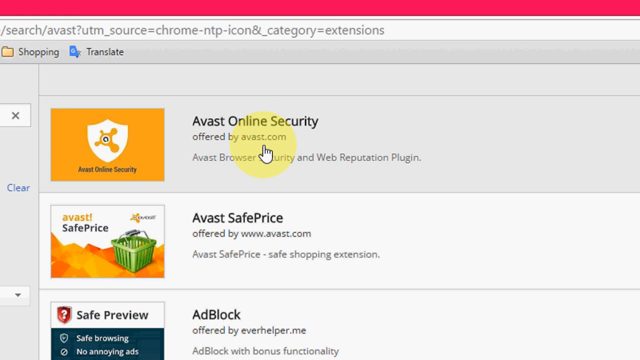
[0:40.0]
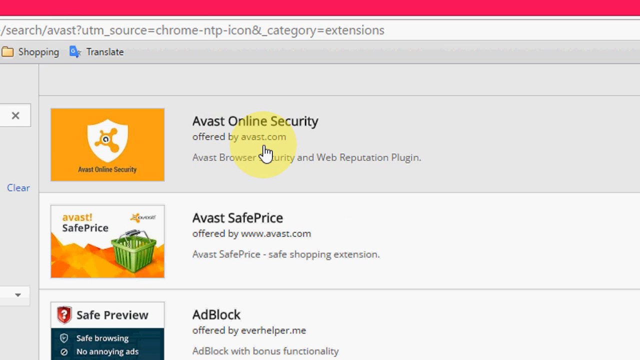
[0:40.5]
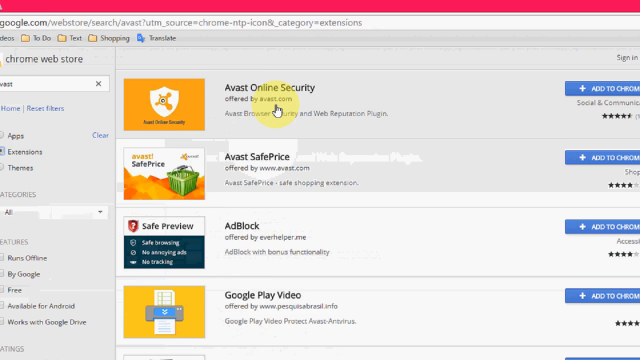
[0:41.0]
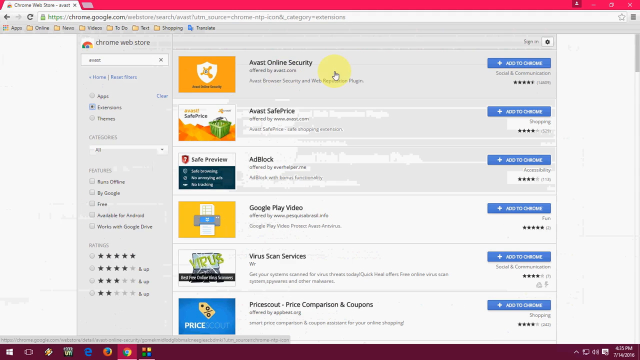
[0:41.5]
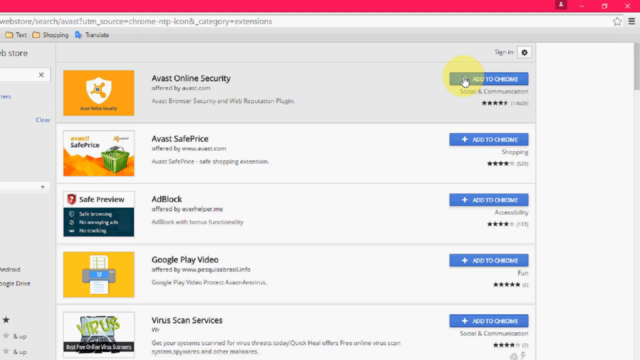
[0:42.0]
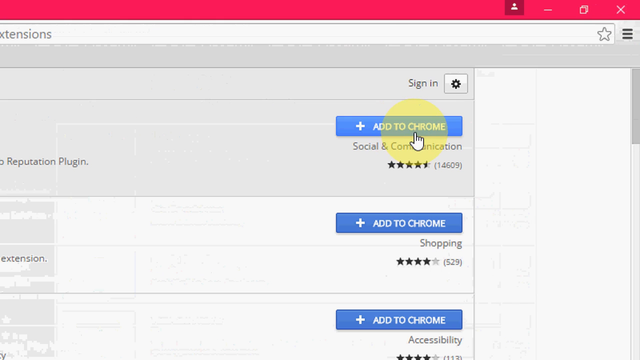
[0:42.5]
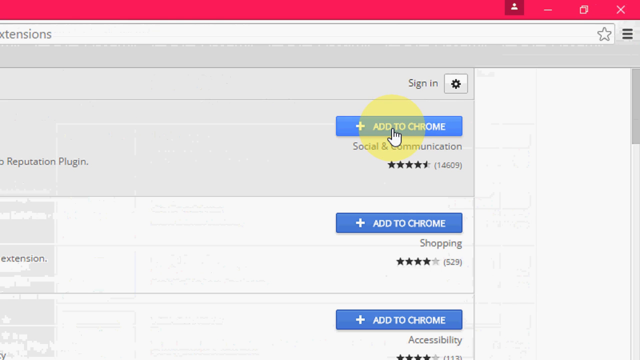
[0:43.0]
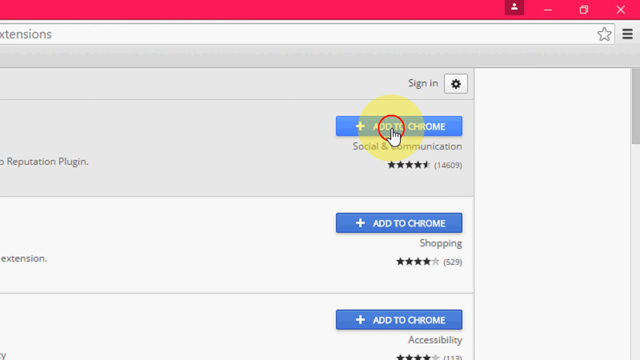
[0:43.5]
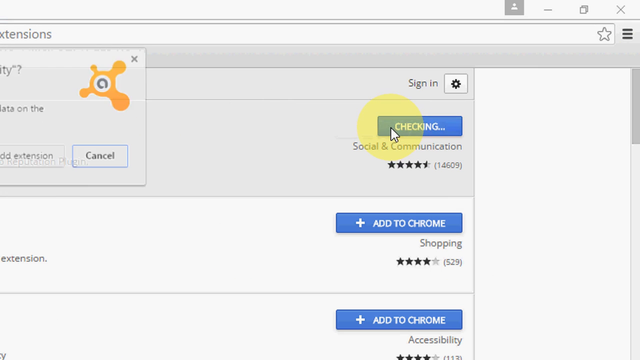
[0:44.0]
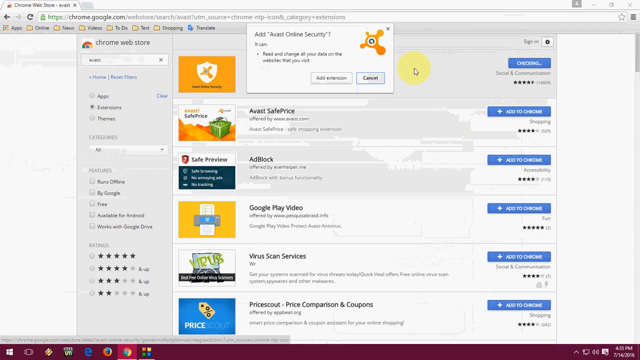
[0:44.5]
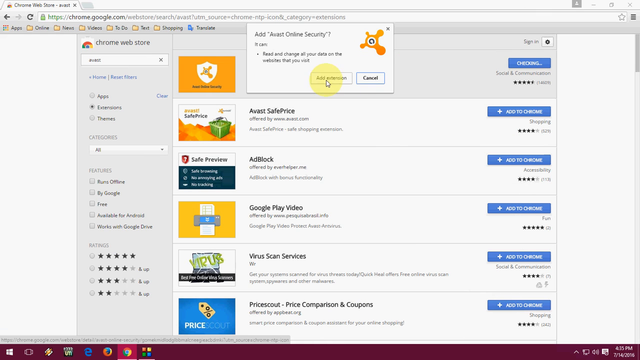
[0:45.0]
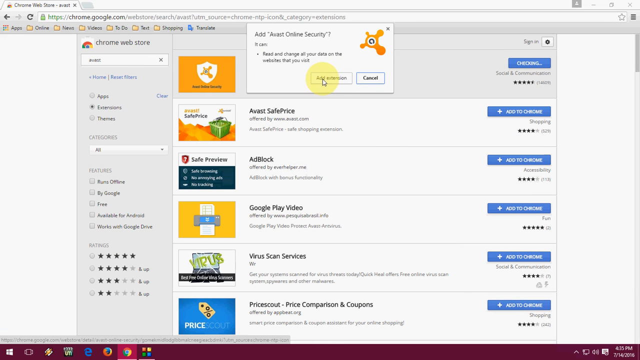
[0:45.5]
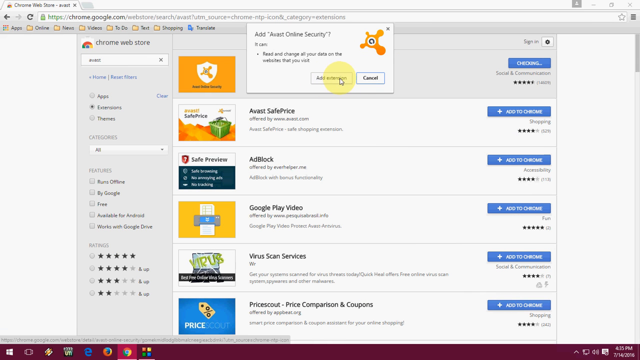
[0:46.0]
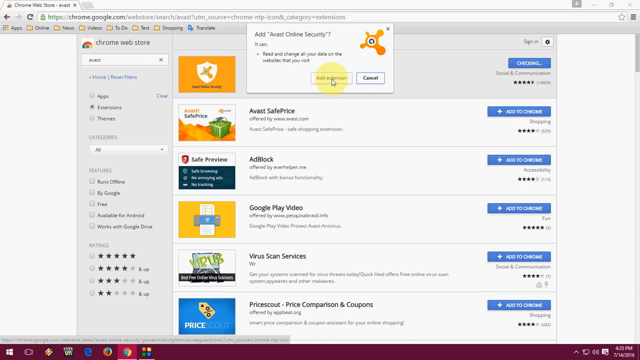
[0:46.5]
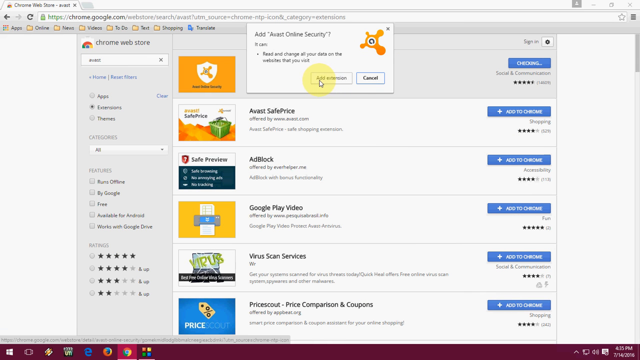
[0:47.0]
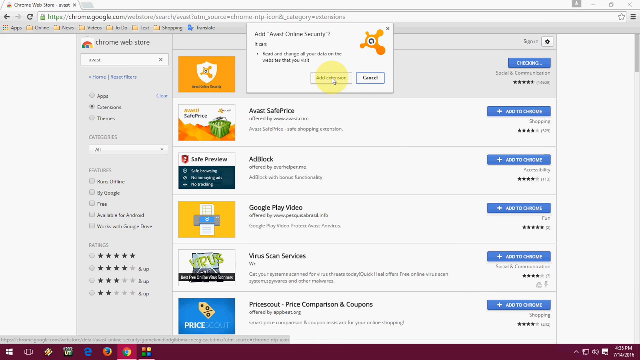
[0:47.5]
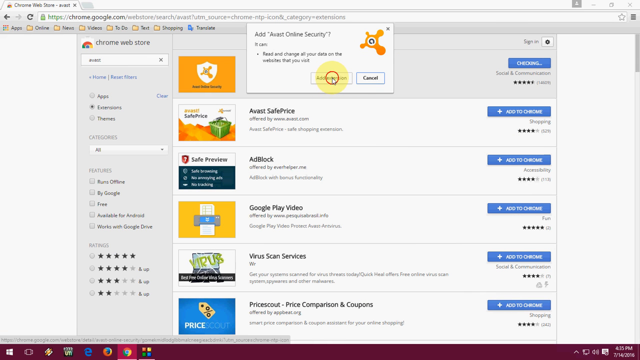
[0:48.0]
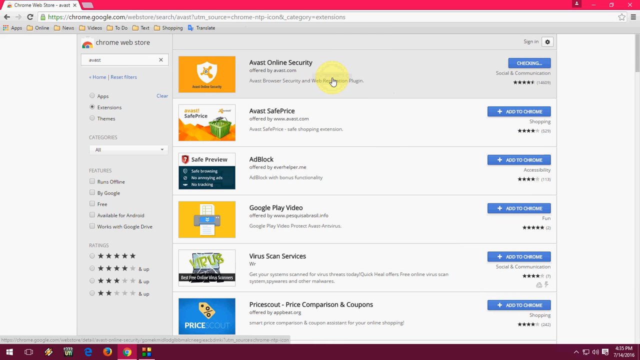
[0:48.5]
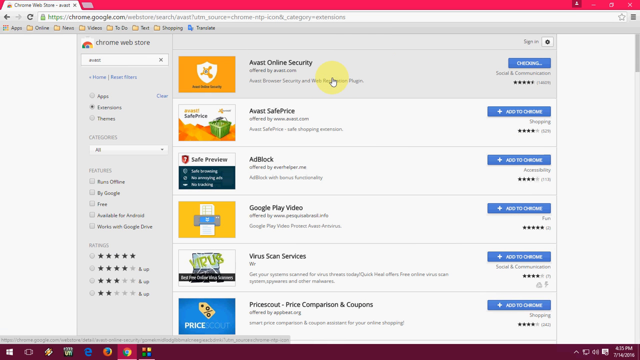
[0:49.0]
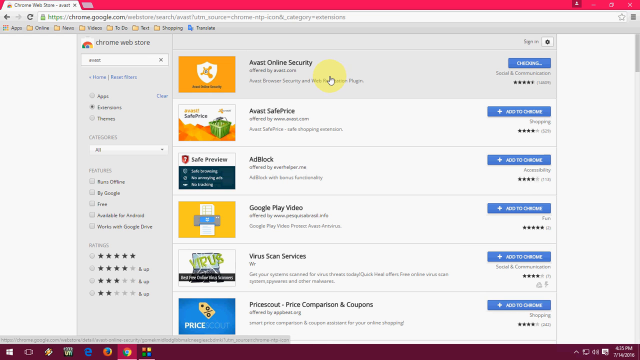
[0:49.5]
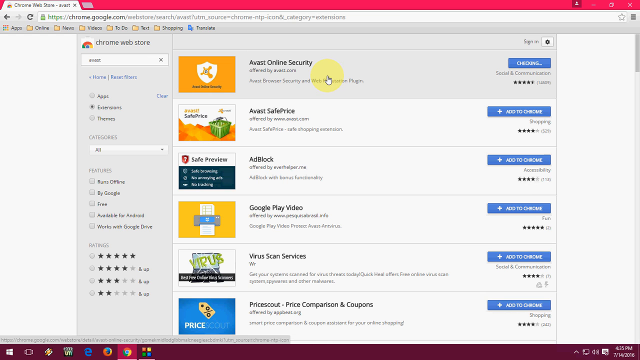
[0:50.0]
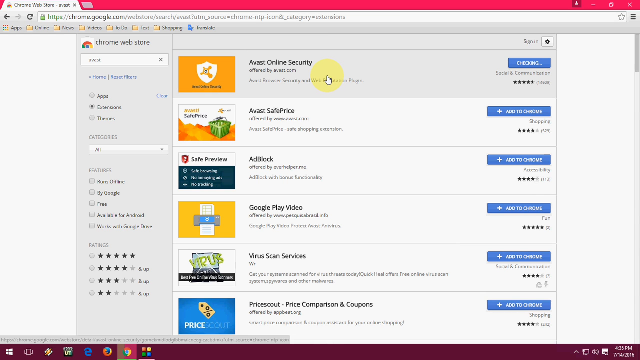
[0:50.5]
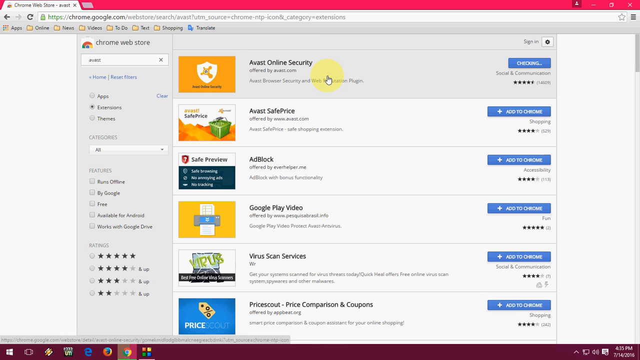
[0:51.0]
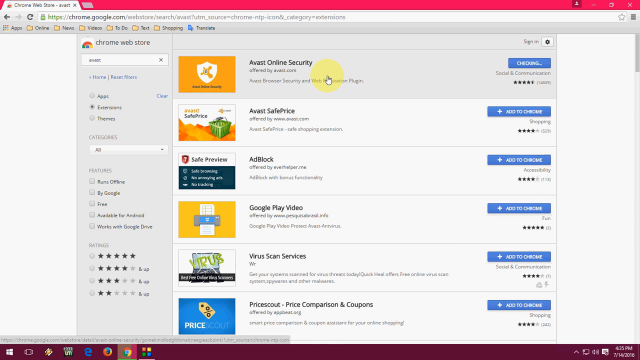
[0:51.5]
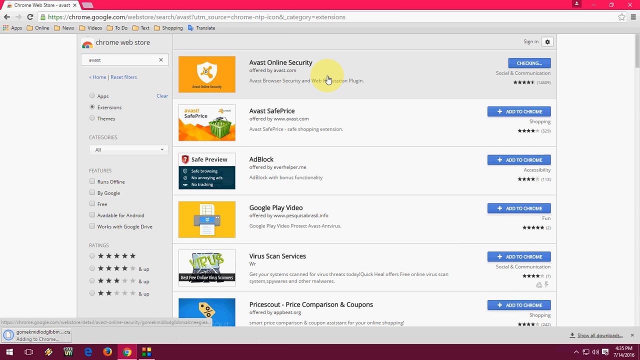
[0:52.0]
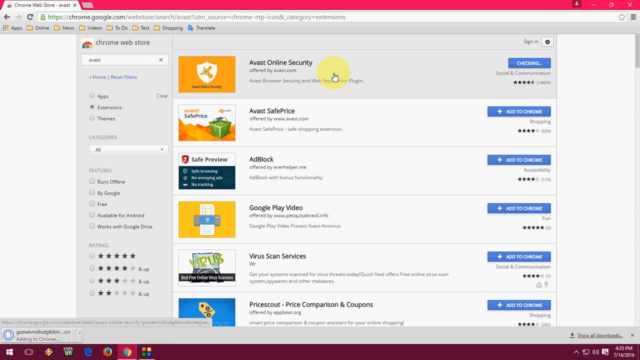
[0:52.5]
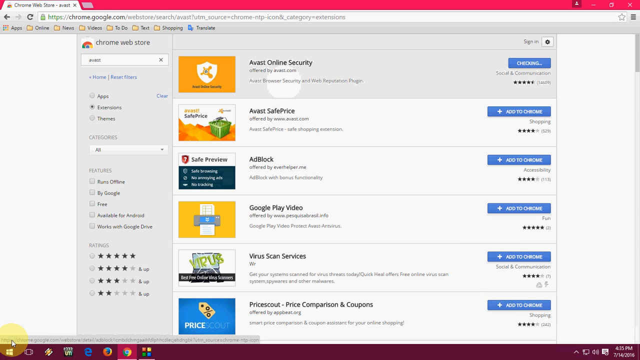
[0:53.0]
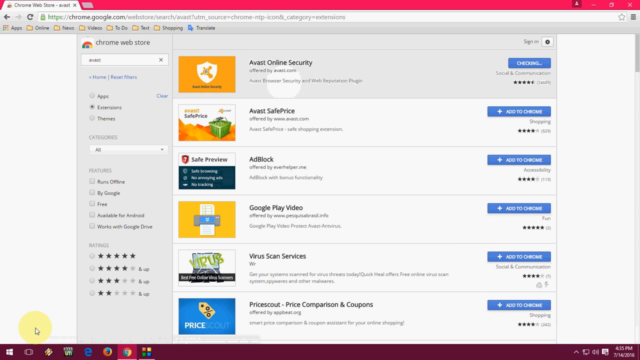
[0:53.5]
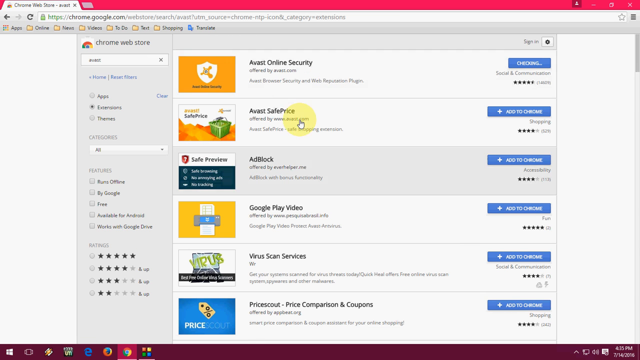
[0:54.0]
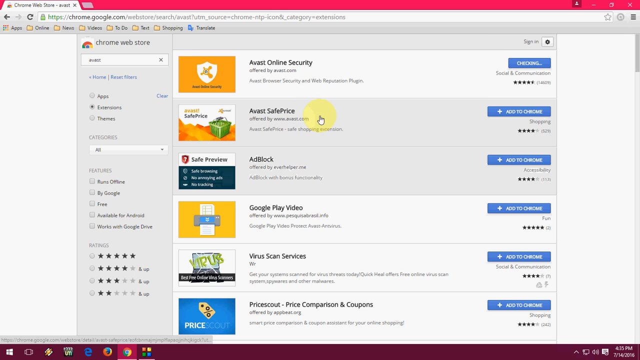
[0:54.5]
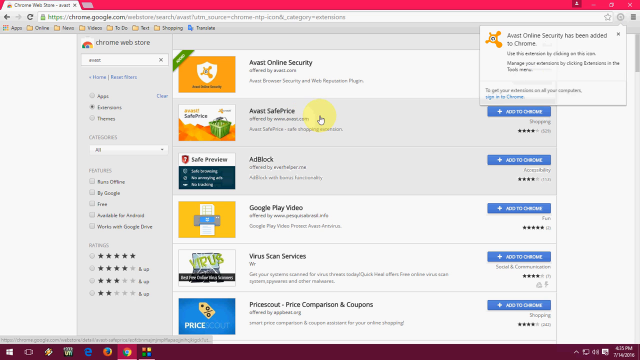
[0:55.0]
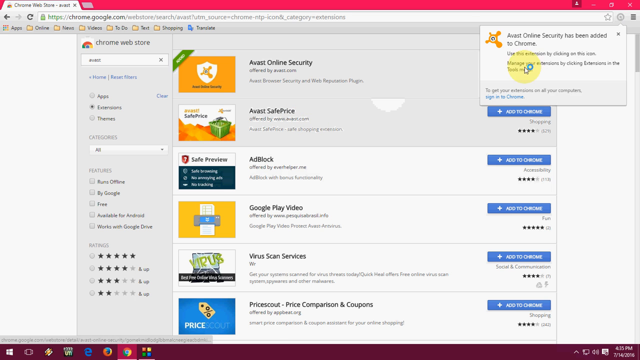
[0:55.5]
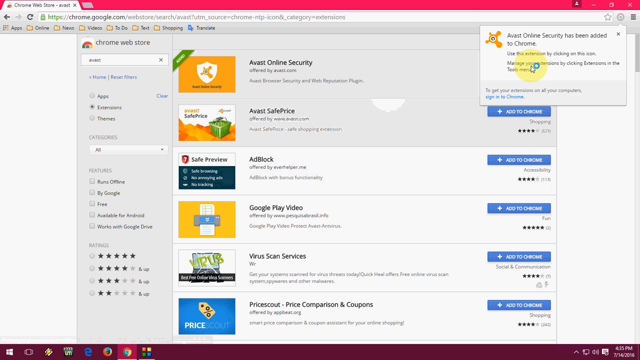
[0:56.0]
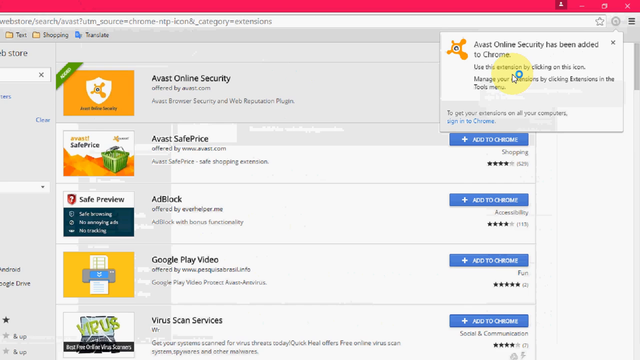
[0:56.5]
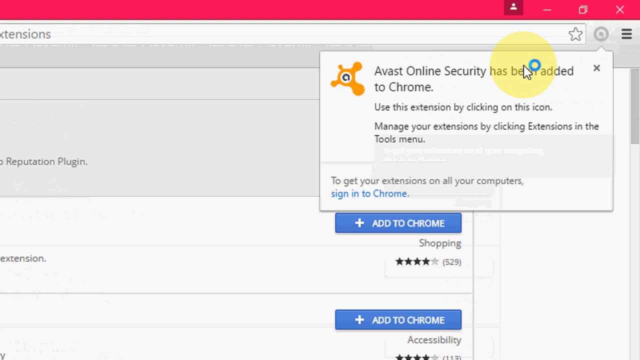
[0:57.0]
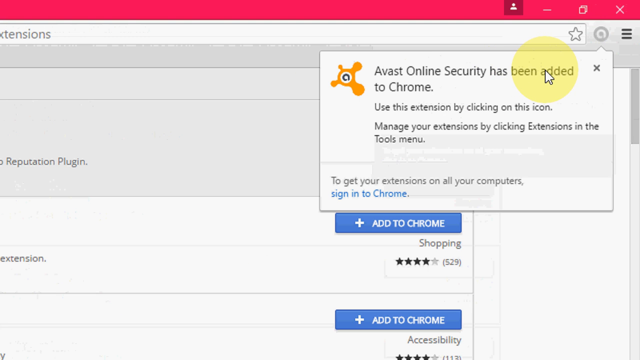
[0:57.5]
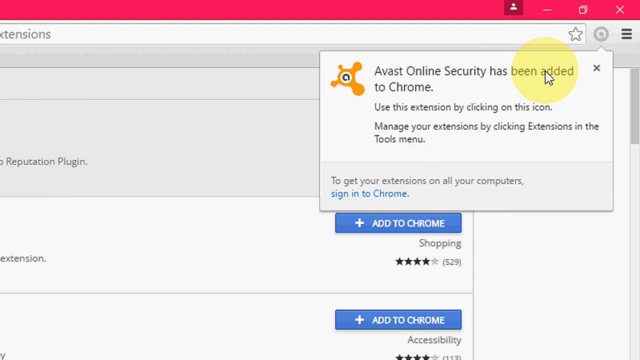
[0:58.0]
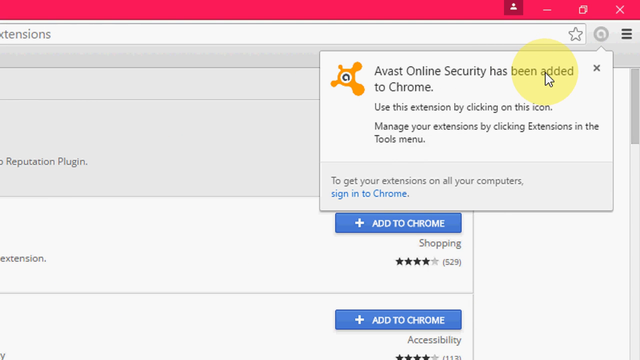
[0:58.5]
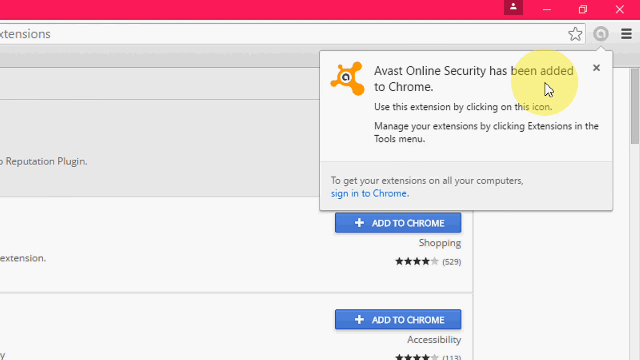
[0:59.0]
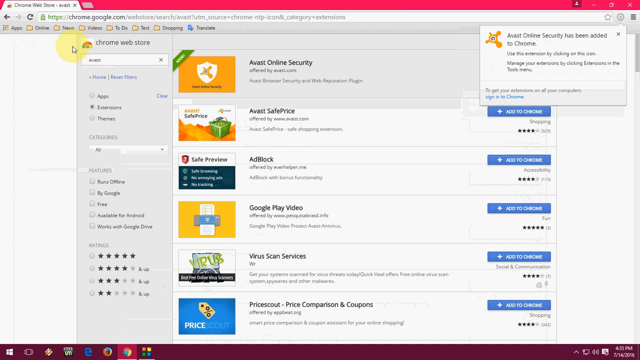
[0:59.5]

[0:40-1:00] On the results page for the Avast search, the view zooms out a bit and the user hovers the mouse over a blue tab that says "Add to Chrome," then clicks it, and it says "Checking." The view zooms out from the close-up, and a pop-up appears that says "Add Avast Online Security." The user hovers the mouse over Add Extension a few times and clicks it, then waits. The cursor changes from yellow to white. A few seconds later the view zooms in on another pop-up that says "Avast Online Security has been added to Chrome. Use this extension by clicking on this icon. Manage your extensions by clicking extensions in the tools menu. To get your extensions on all your computers, sign in to Chrome." The user's cursor has a blue circle just to the right of it.